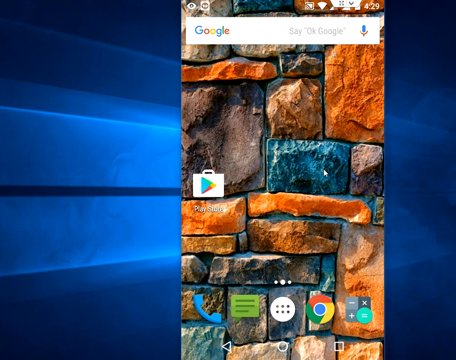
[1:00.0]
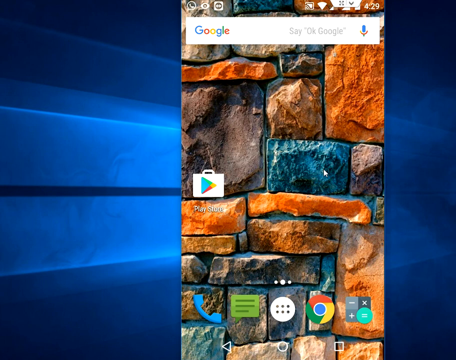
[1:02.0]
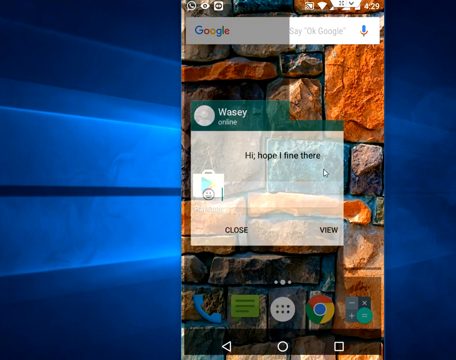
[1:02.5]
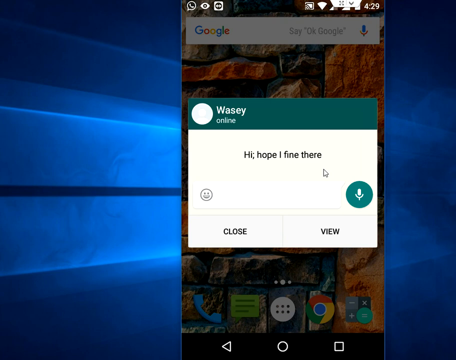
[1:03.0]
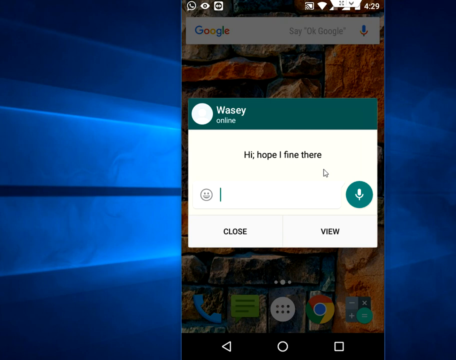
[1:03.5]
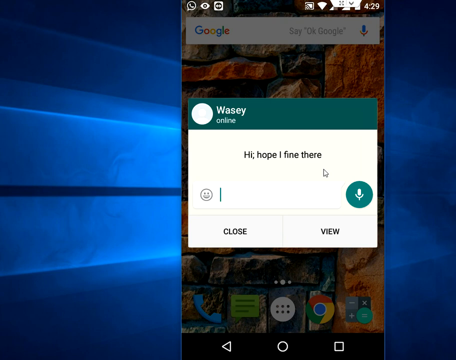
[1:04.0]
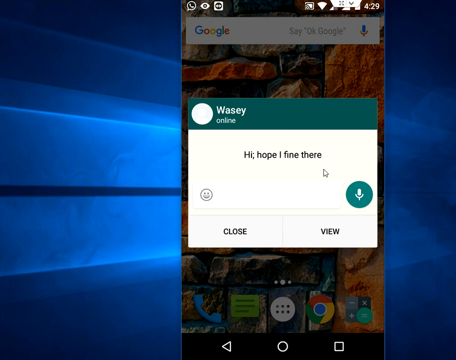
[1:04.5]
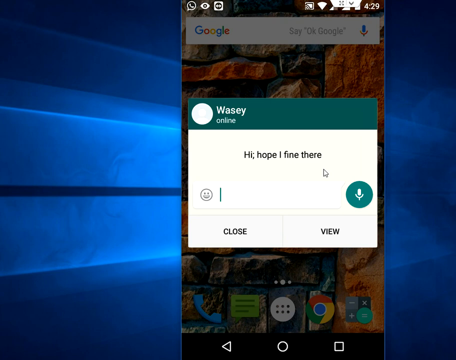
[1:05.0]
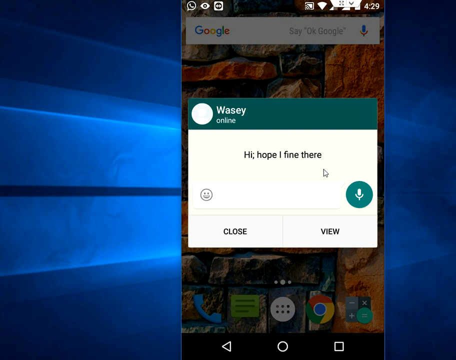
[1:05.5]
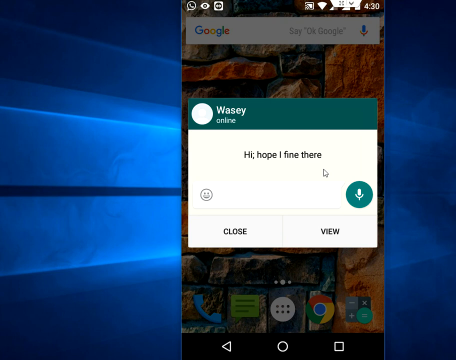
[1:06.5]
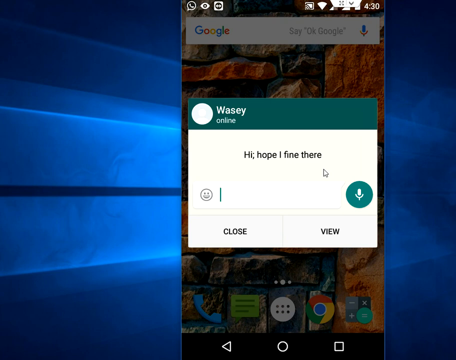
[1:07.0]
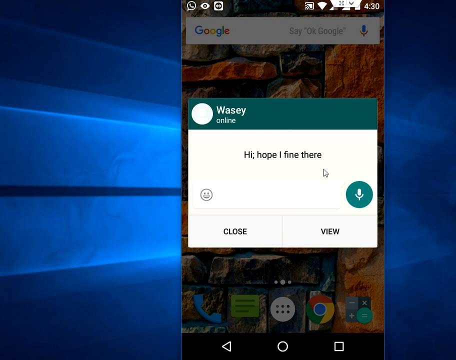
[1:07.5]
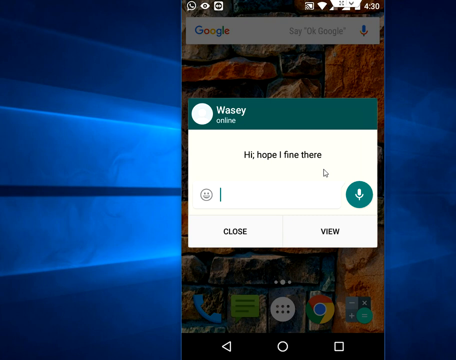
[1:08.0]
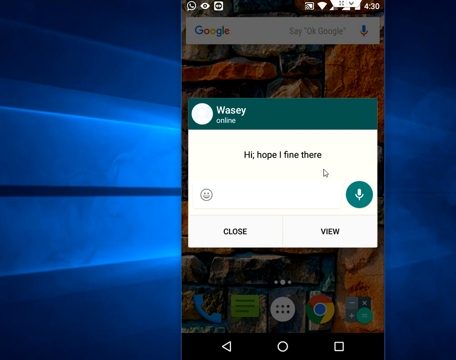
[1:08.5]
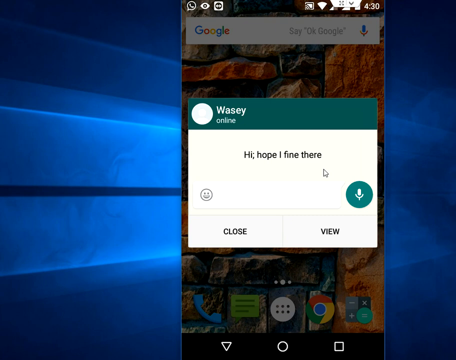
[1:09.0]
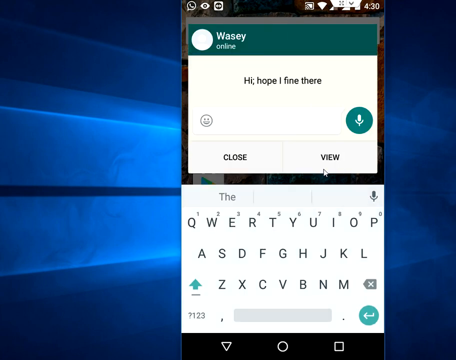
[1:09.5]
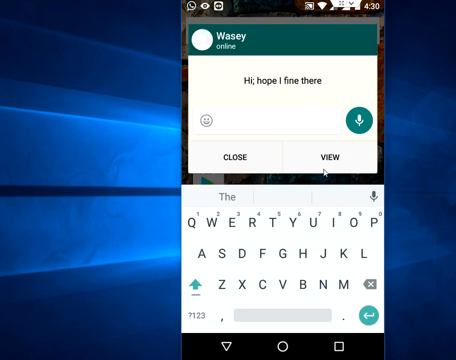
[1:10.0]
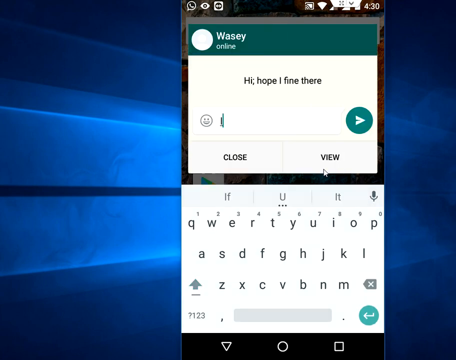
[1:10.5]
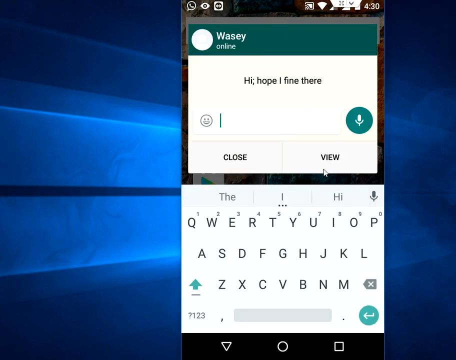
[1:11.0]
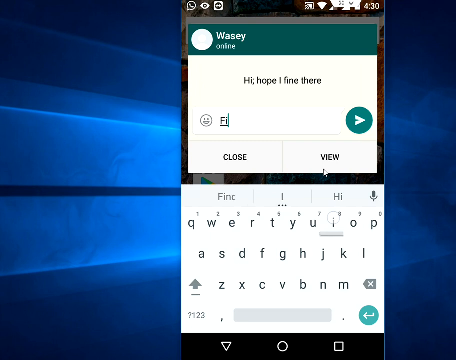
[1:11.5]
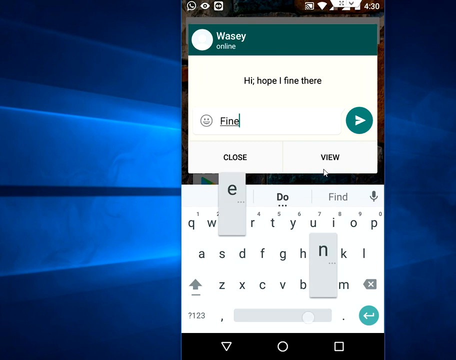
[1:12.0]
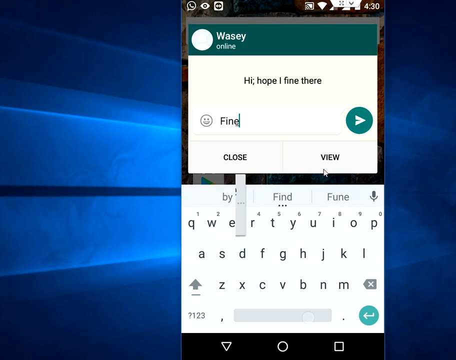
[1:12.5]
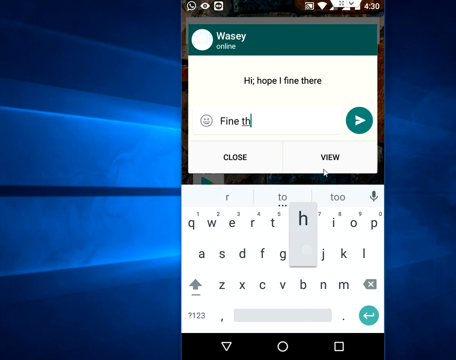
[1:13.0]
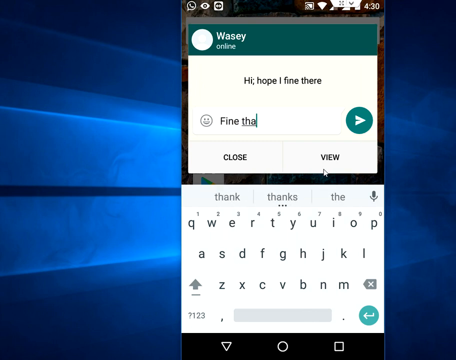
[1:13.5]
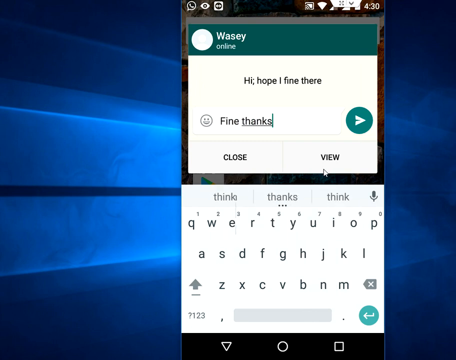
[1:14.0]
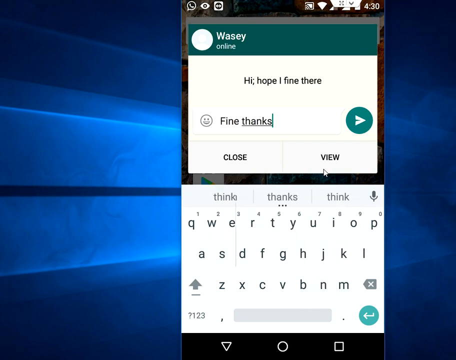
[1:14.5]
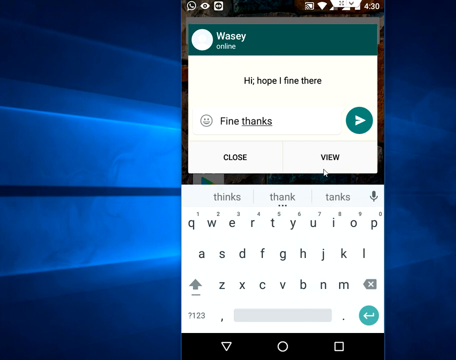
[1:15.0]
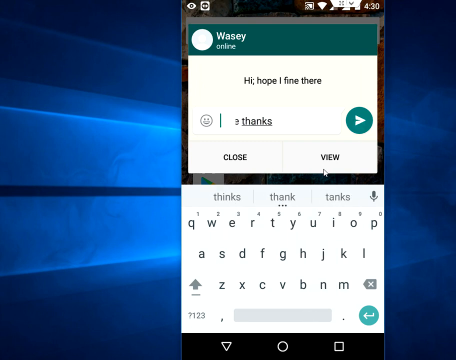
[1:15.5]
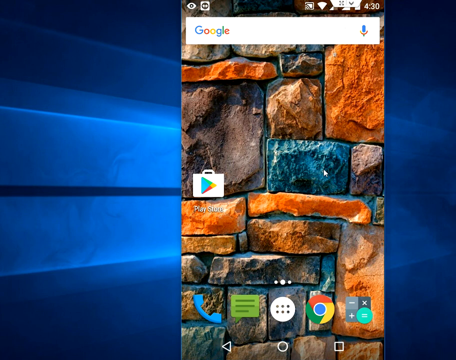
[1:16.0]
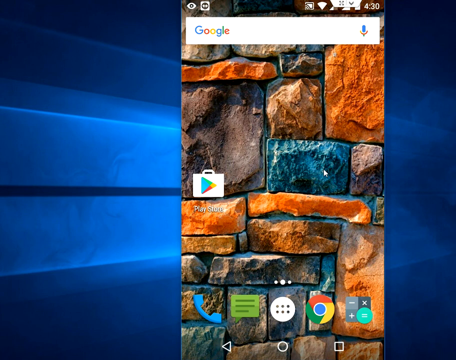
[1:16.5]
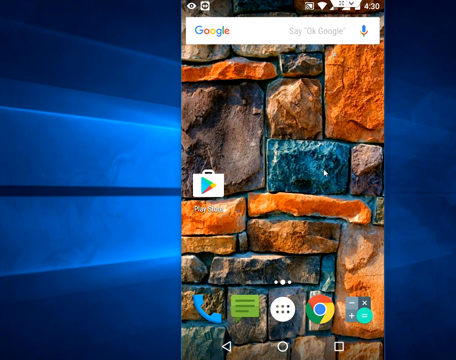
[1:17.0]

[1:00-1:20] The video is possibly meant to teach someone how to use different apps. A screenshot of someone's cell phone is shown, possibly set in a PowerPoint presentation. A small window quickly opens on it. It is teal at the top and reads "Wasey" and then "online", followed by the words "hi, hope I fine there". There is a small smiley face on the left, a microphone icon on the right, and the choices "close" or "view" at the bottom. A cursor blinks near the smiley face, apparently where something could be typed. Someone then types; no hands are visible, letters simply appear, and a keyboard appears at the bottom as "fine thanks" is typed. The app then closes, and the screenshot of the phone with its many rocks is shown.